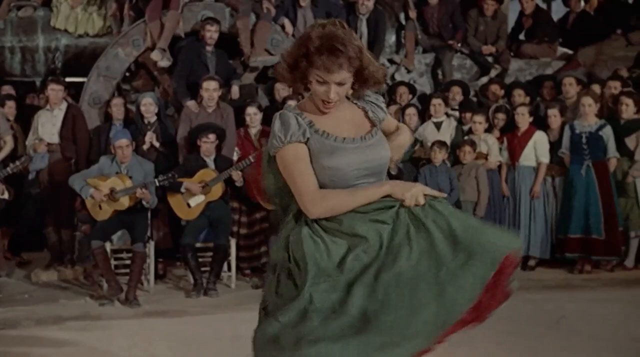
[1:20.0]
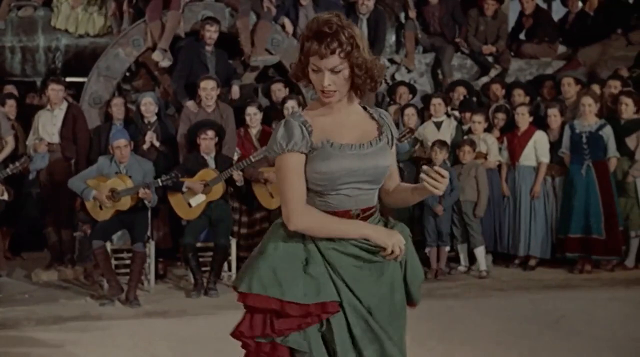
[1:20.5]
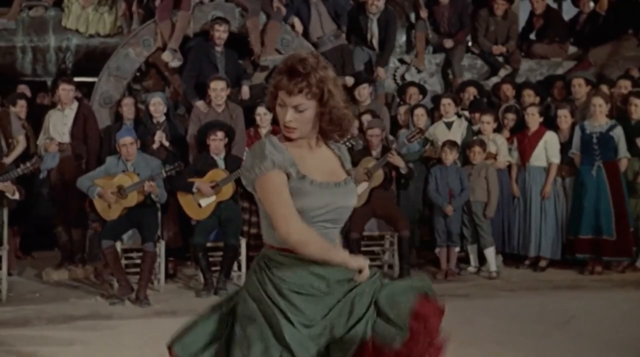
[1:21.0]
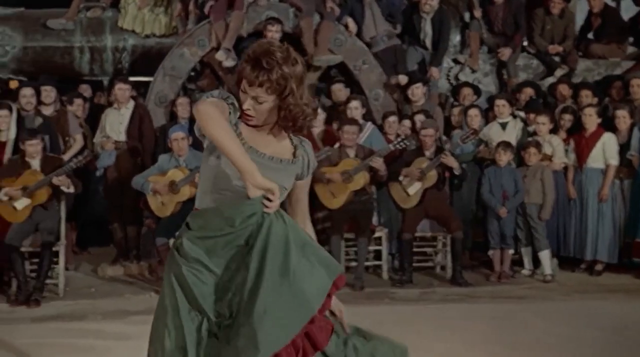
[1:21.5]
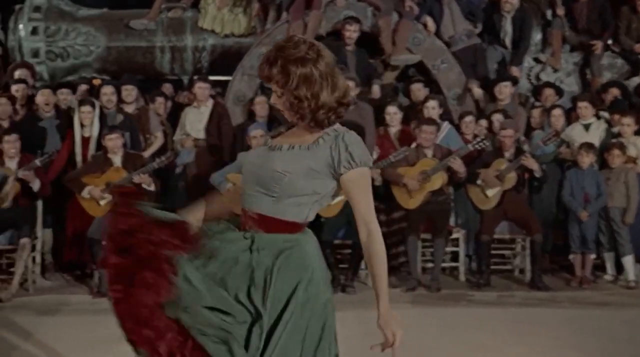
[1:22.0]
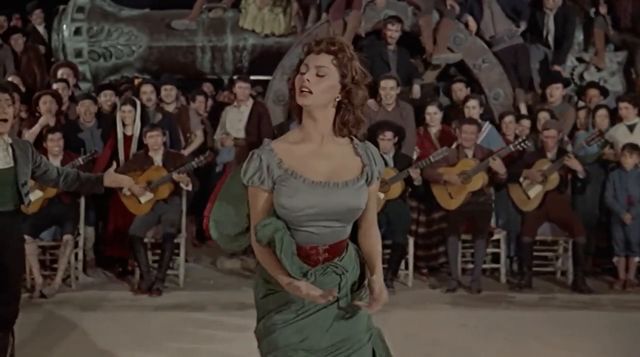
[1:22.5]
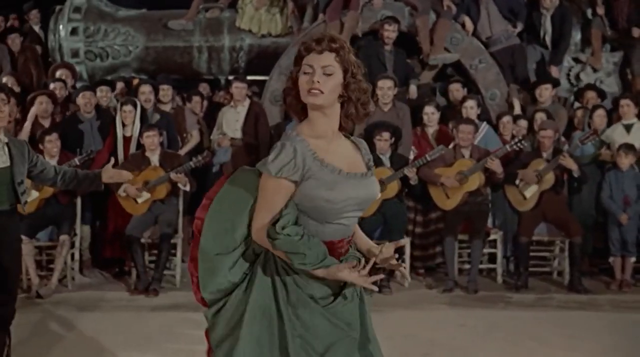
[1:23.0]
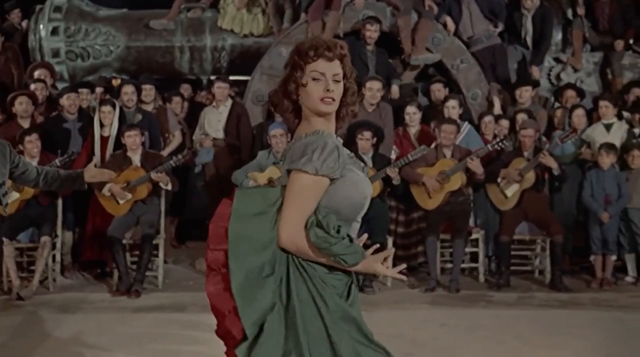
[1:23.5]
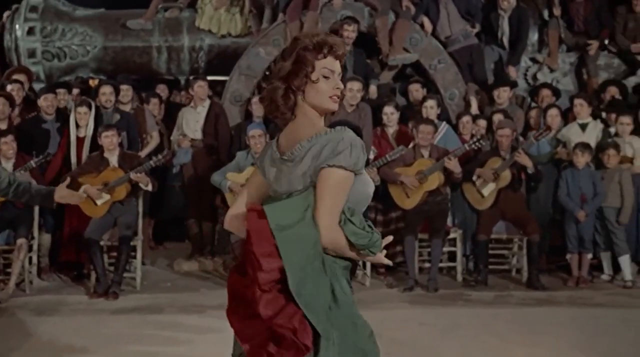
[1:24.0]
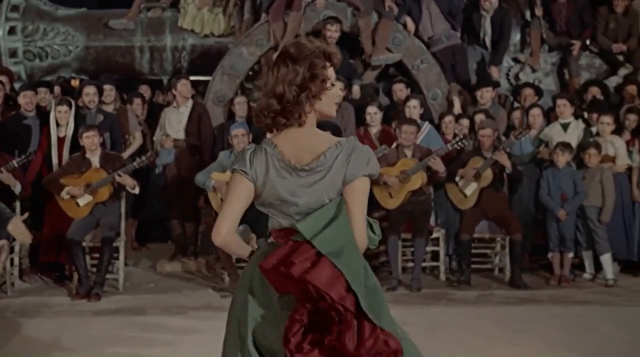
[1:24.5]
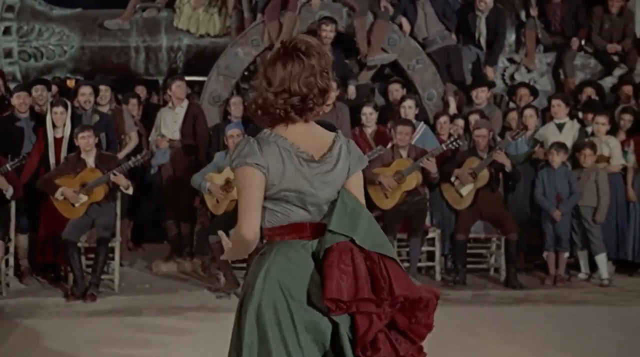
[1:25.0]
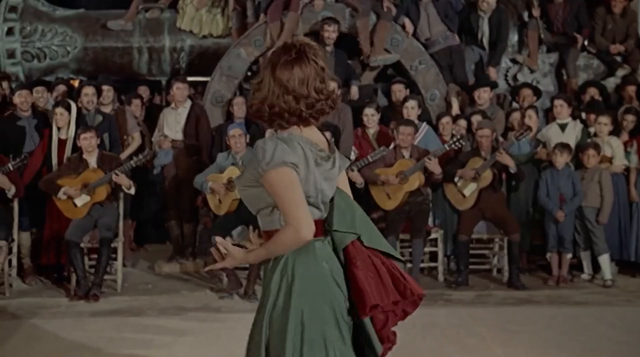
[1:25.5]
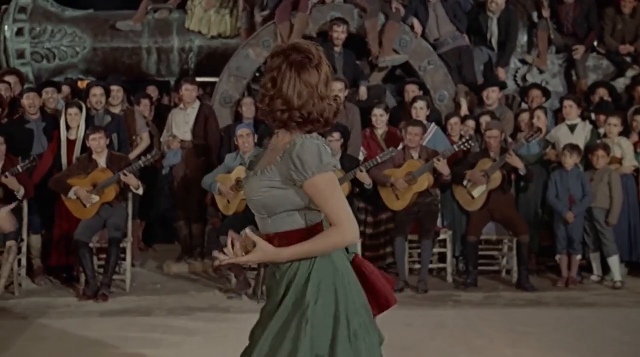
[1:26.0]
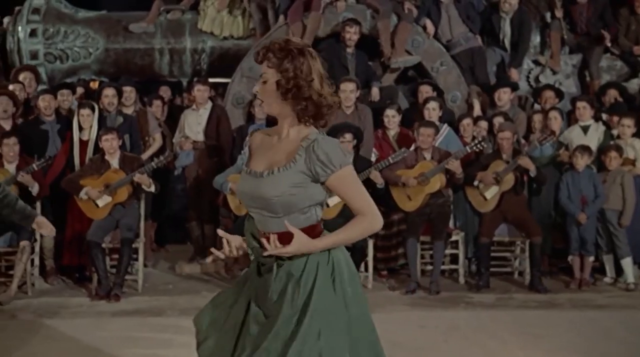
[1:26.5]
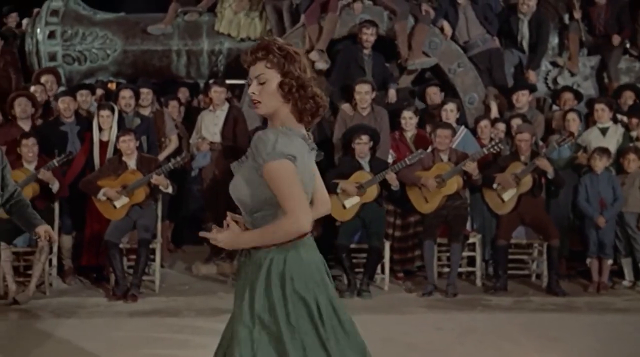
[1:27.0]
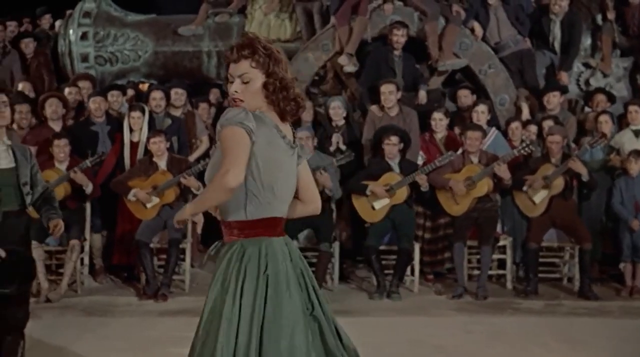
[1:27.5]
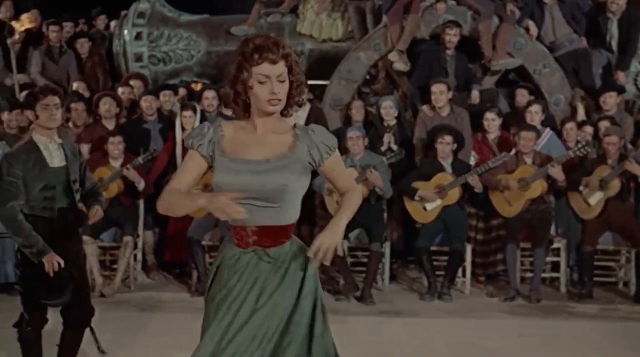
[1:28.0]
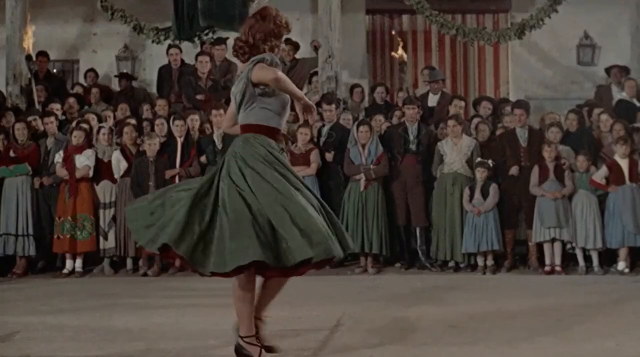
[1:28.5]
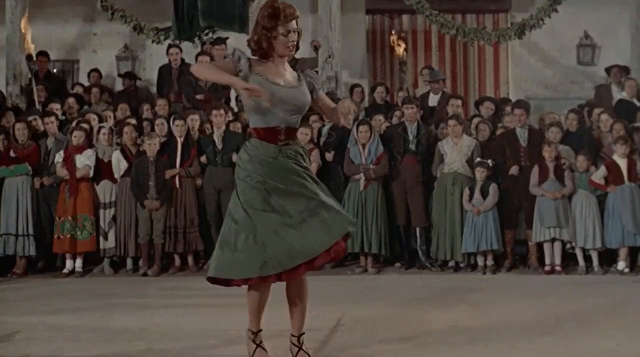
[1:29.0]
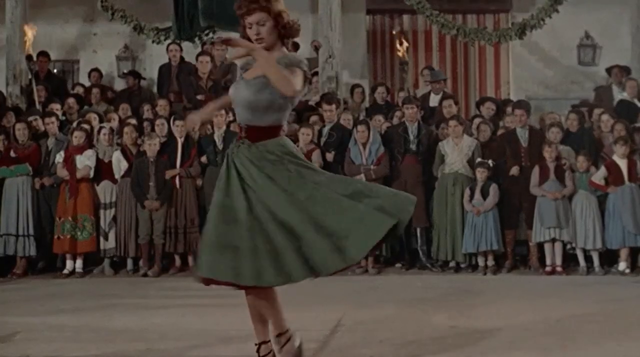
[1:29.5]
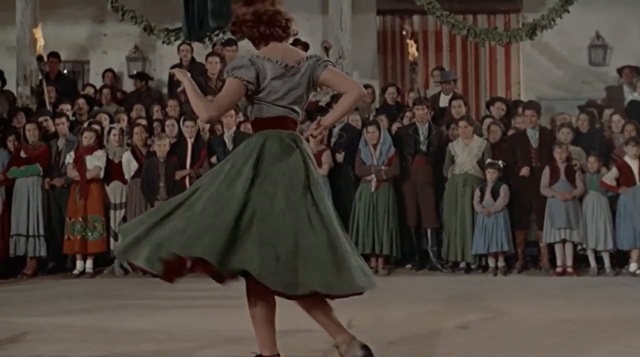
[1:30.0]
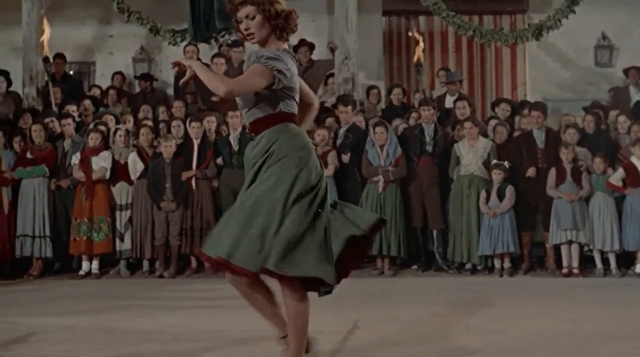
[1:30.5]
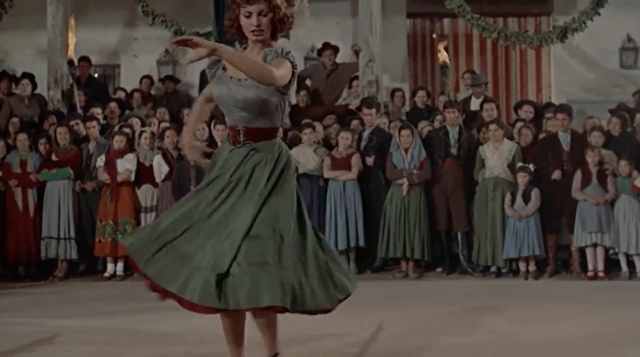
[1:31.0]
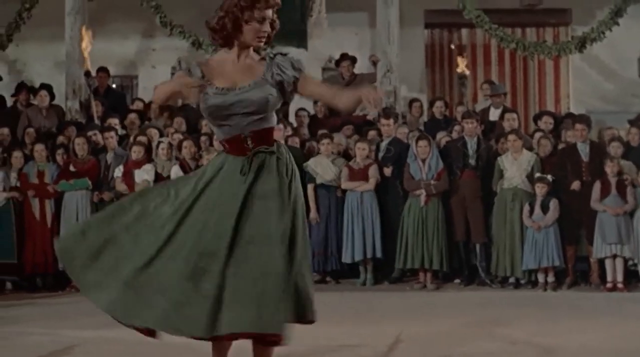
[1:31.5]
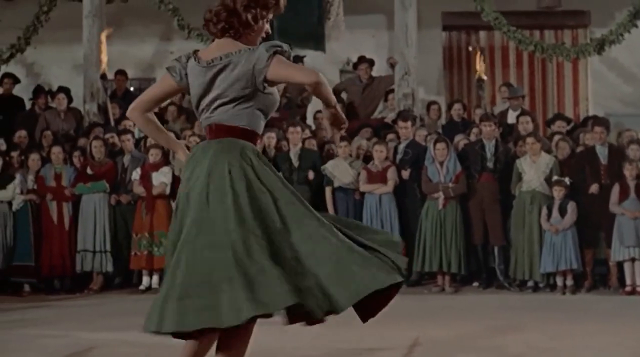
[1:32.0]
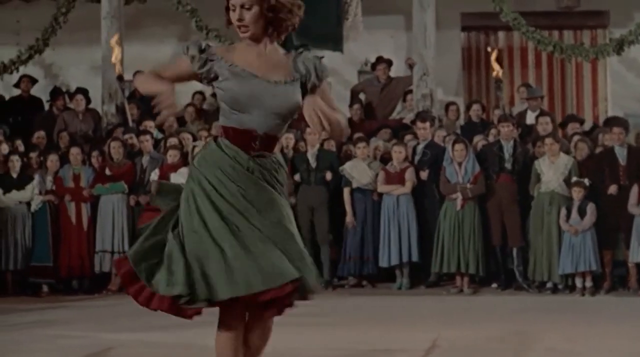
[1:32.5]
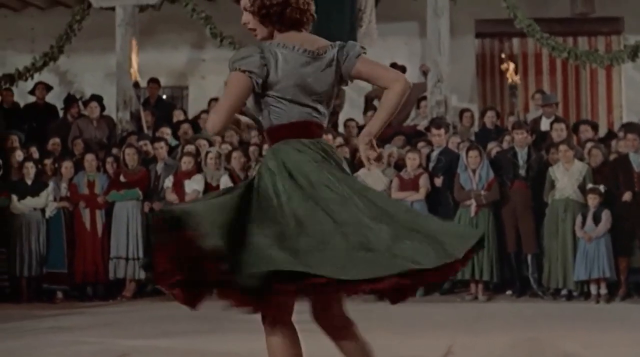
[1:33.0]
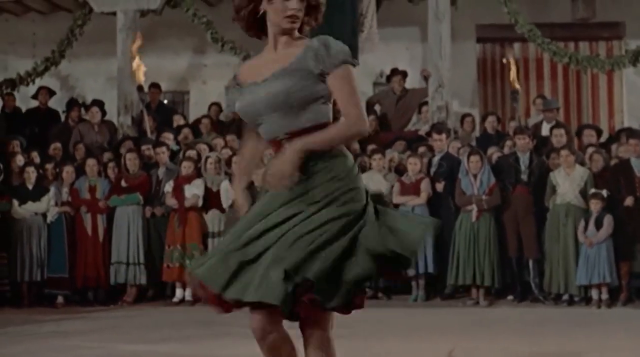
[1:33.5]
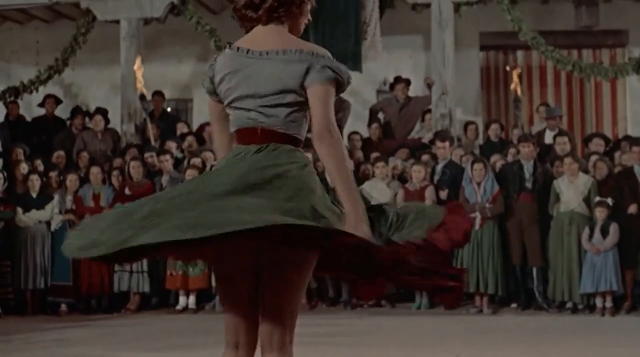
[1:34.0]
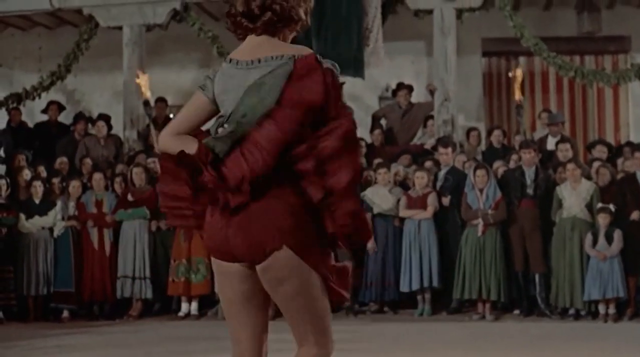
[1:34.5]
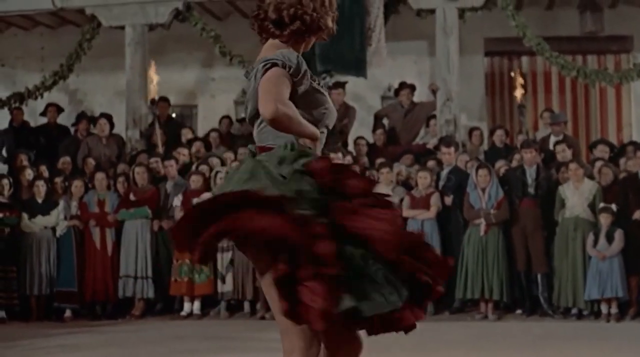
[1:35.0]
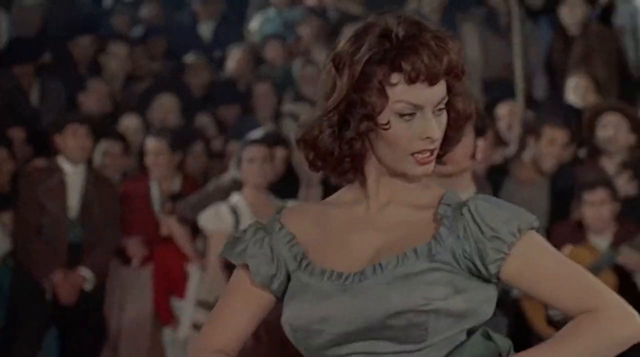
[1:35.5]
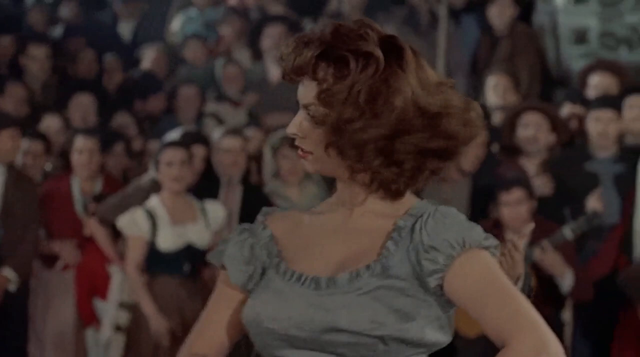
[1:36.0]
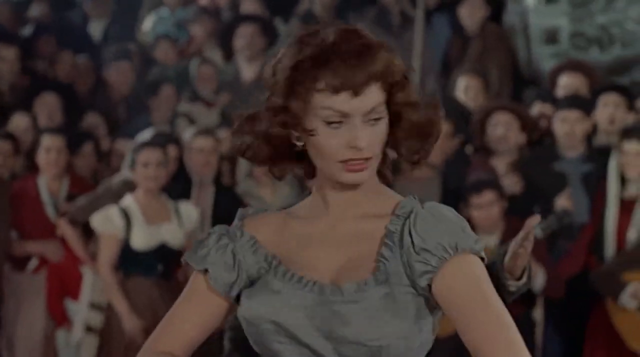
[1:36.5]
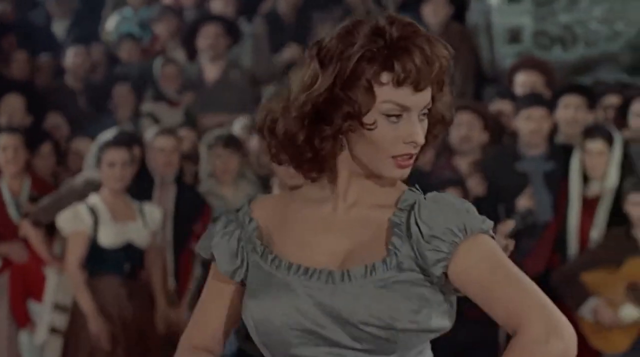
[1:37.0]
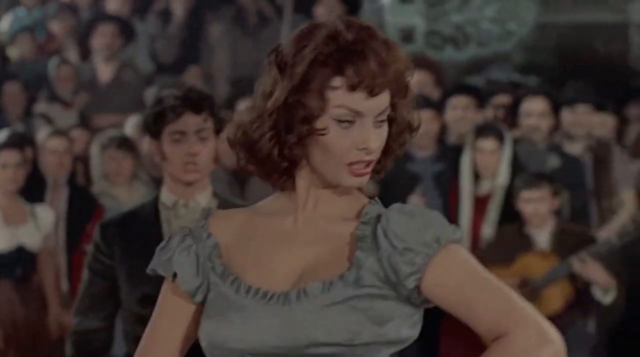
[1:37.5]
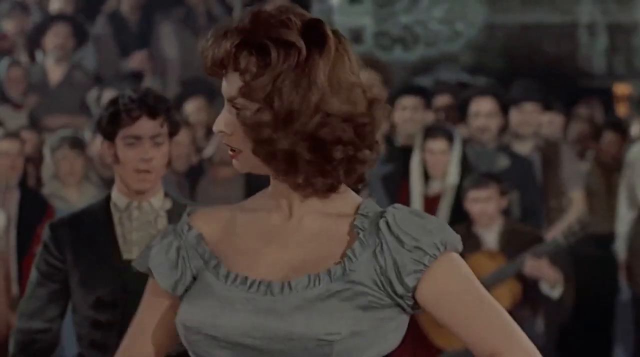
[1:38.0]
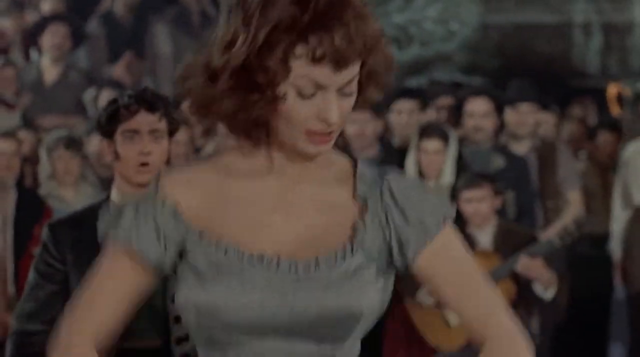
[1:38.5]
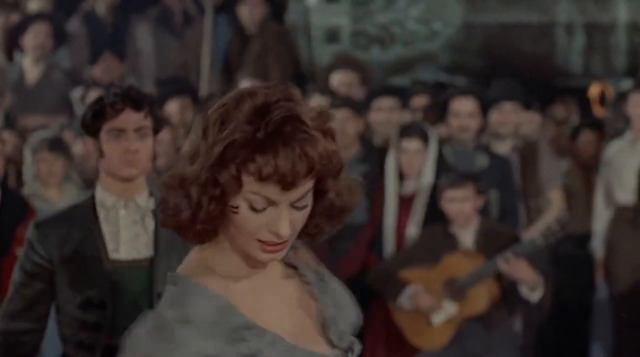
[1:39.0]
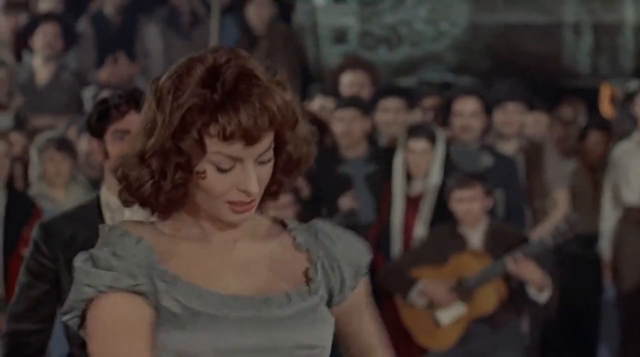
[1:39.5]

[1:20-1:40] The shot is mostly of the woman dancing in a flamenco style. She starts by sort of tucking her skirt, which has netting underneath to make it puff out a bit, under one arm. At first the musicians on their guitars are behind her, along with some audience members. The shot then cuts to view her from the other side, showing the audience all around her in a big circle, with a lot of people in shot at any one time. At one point she moves her skirt so that her underwear shows. Her shoes are black heels with straps. Her dress has a sort of silvery greenish top with capped sleeves, and the skirt is green with red netting underneath.